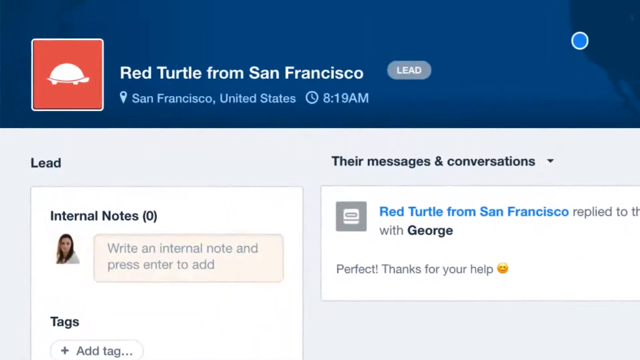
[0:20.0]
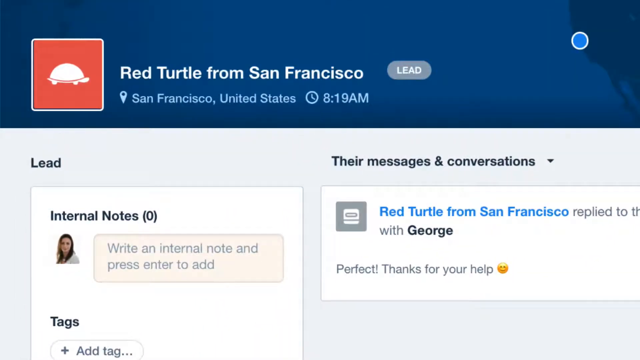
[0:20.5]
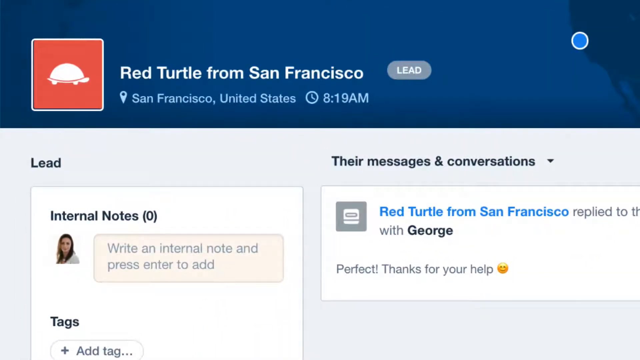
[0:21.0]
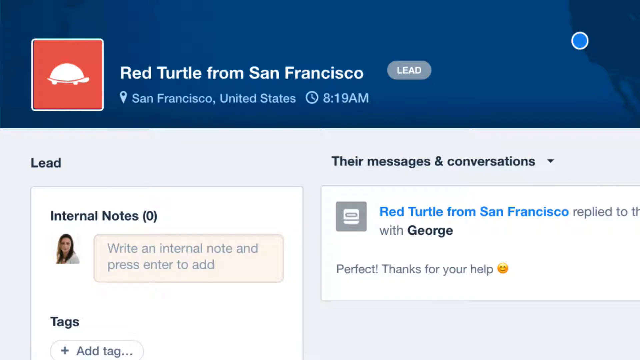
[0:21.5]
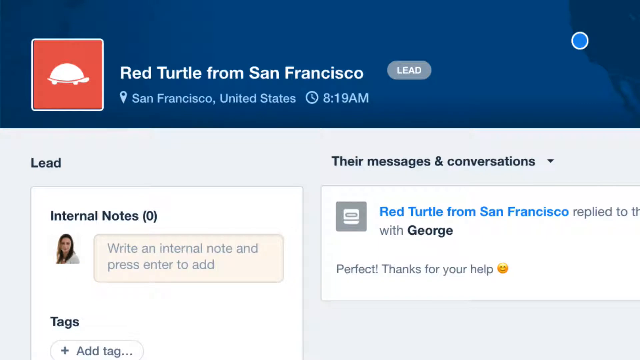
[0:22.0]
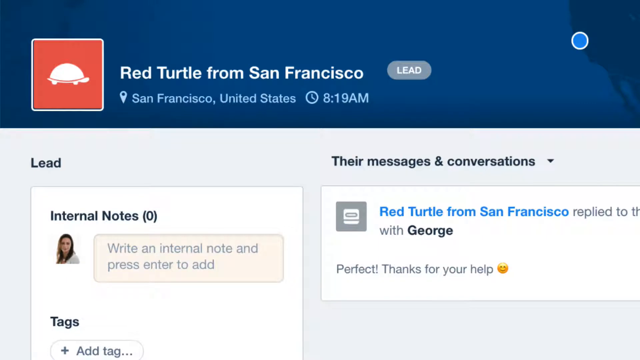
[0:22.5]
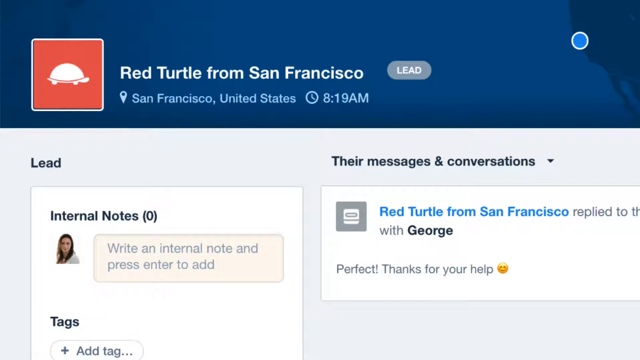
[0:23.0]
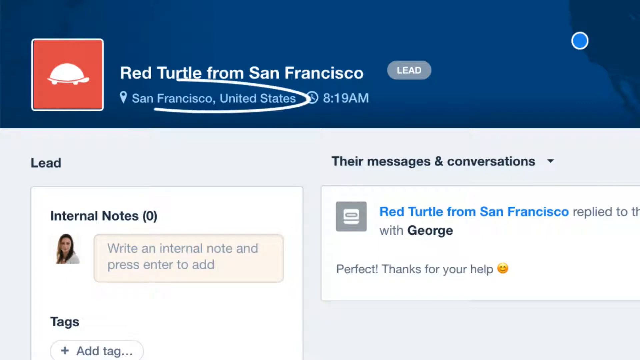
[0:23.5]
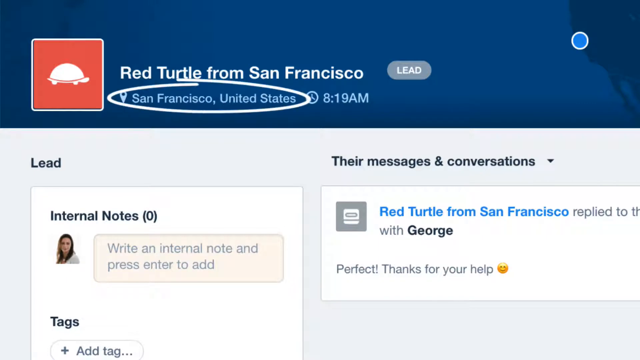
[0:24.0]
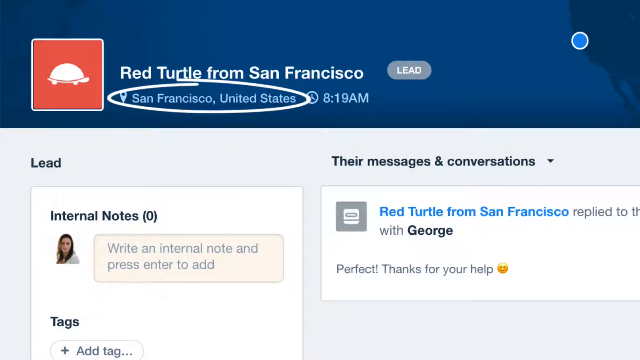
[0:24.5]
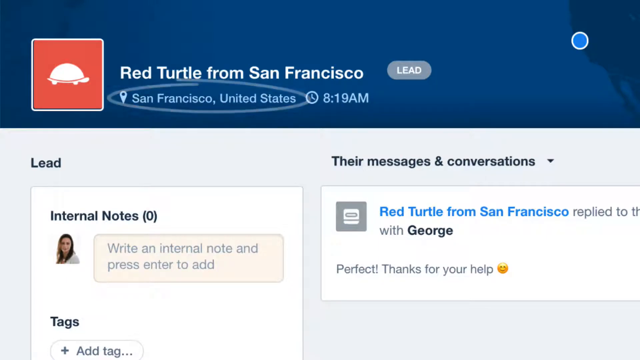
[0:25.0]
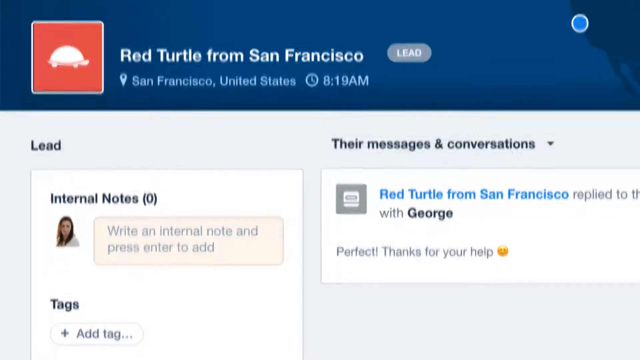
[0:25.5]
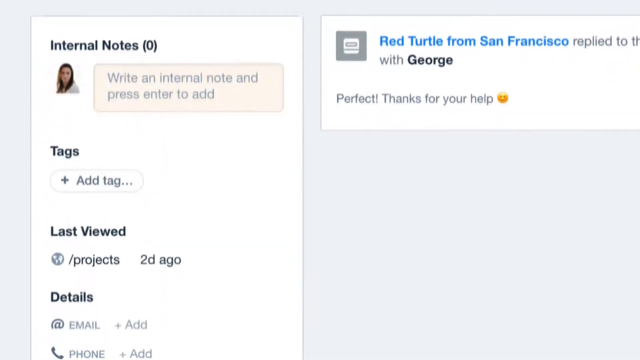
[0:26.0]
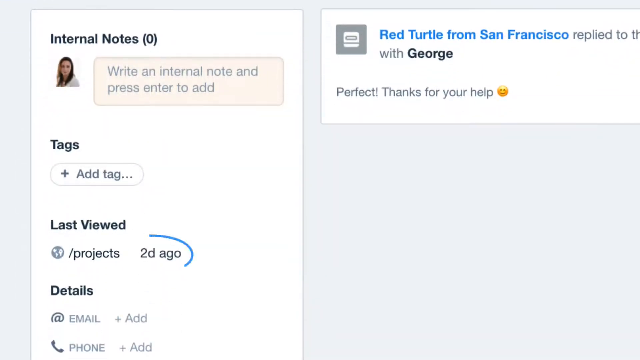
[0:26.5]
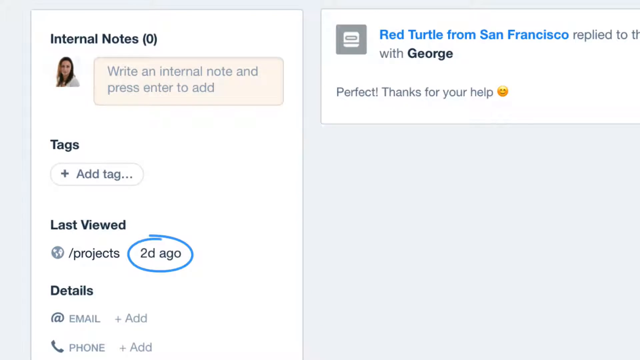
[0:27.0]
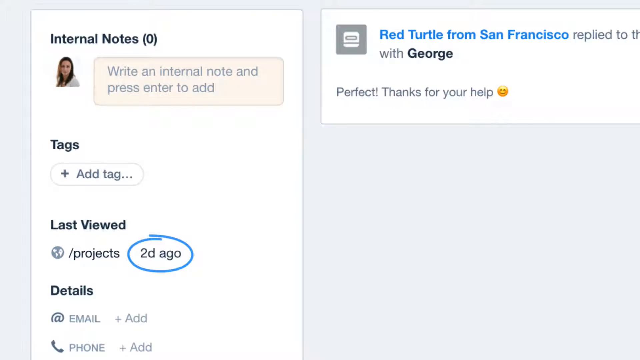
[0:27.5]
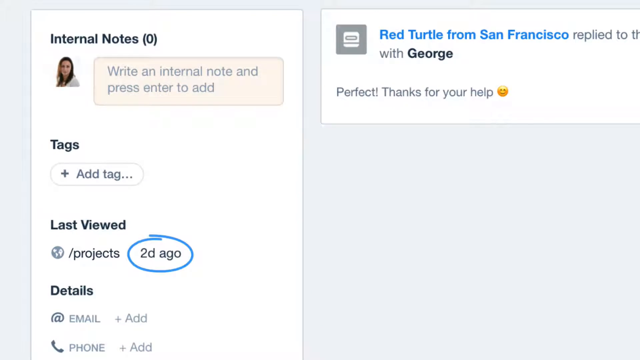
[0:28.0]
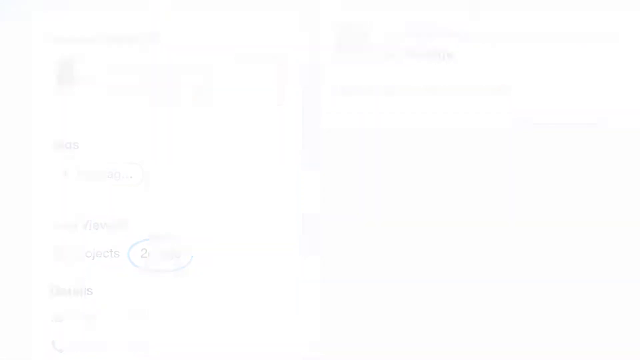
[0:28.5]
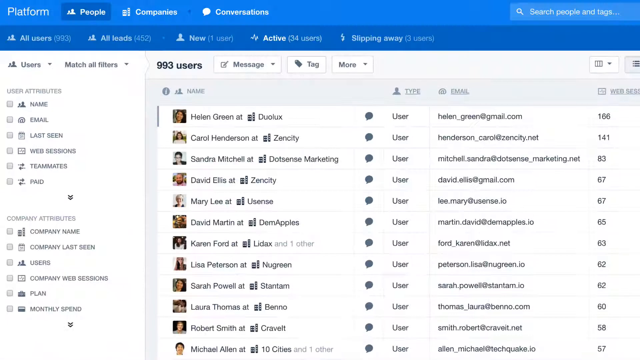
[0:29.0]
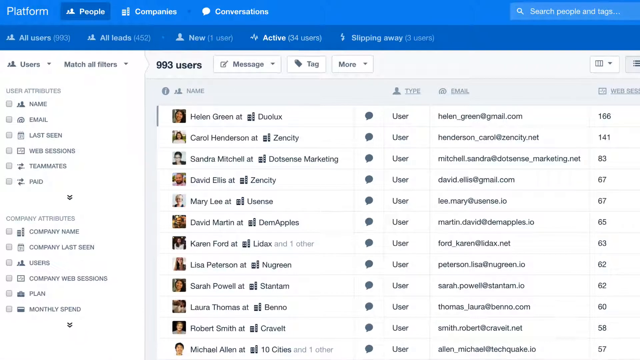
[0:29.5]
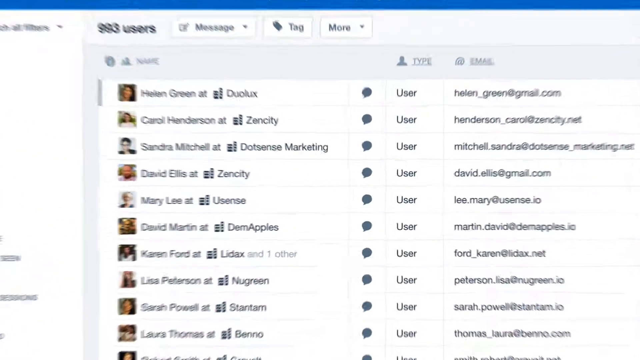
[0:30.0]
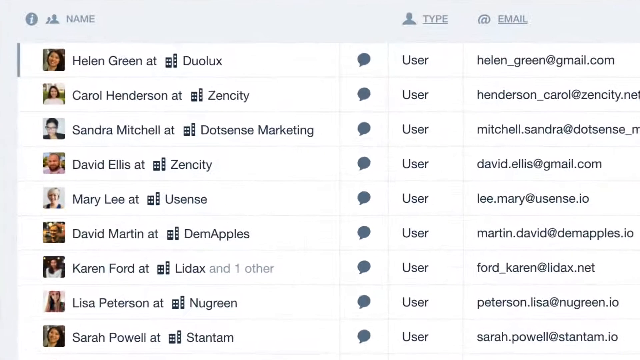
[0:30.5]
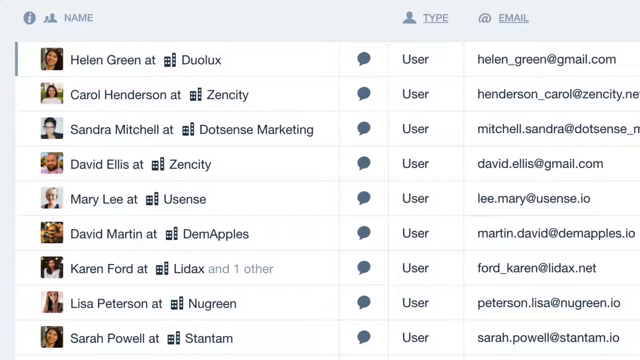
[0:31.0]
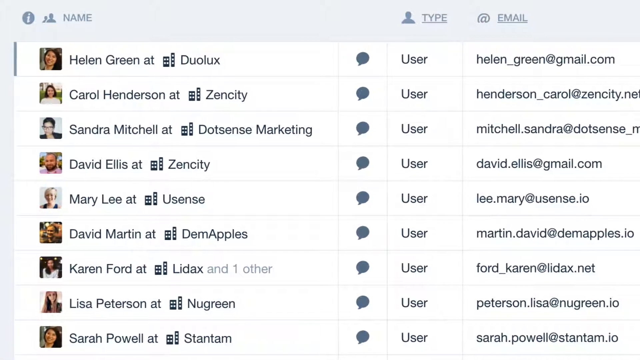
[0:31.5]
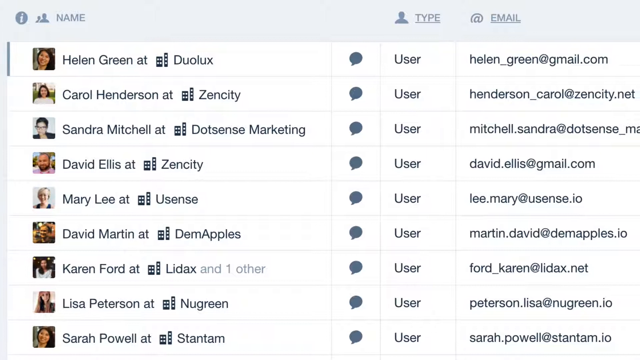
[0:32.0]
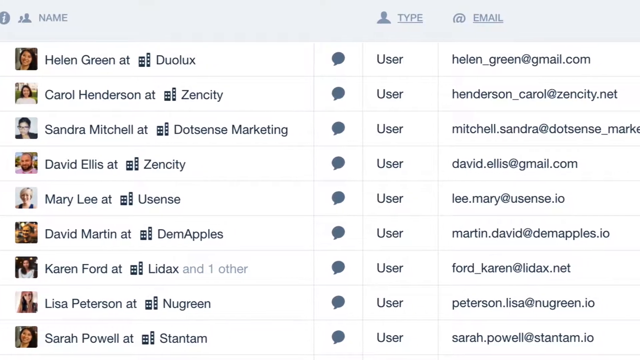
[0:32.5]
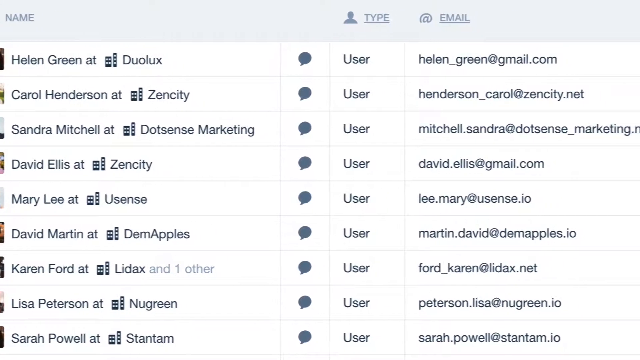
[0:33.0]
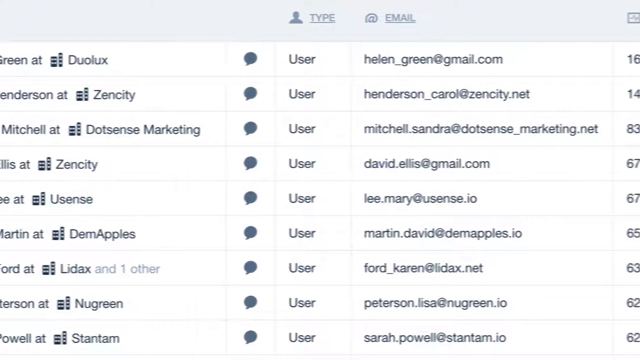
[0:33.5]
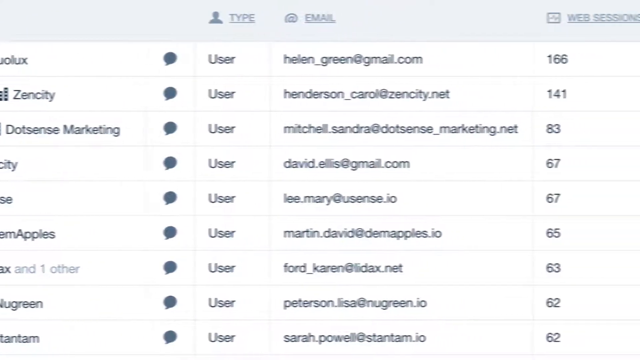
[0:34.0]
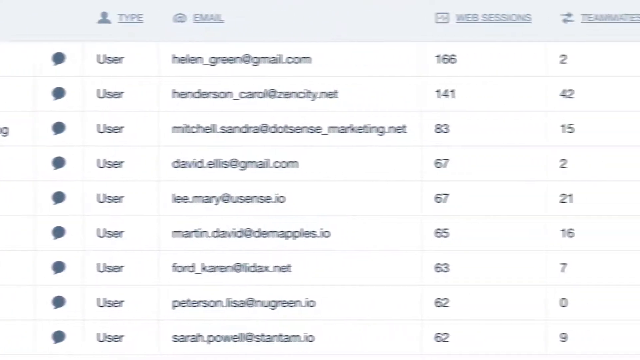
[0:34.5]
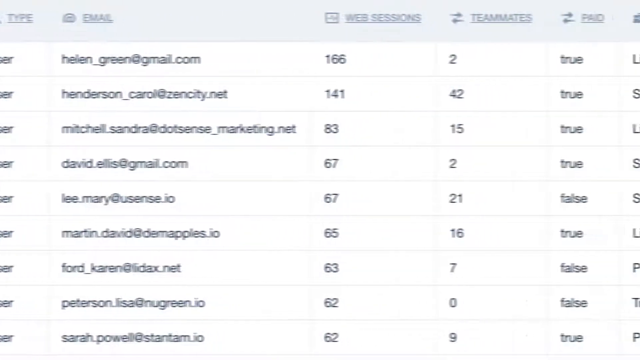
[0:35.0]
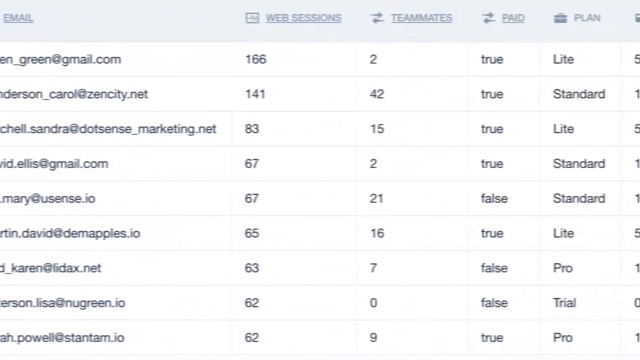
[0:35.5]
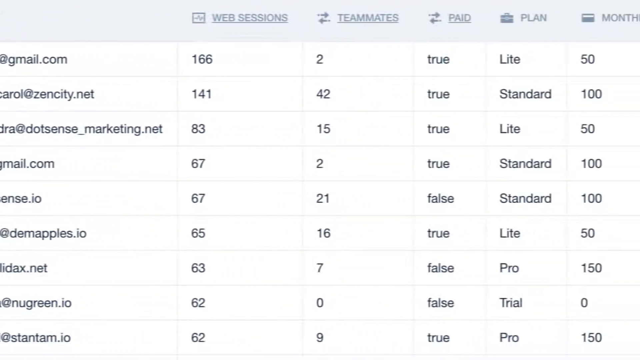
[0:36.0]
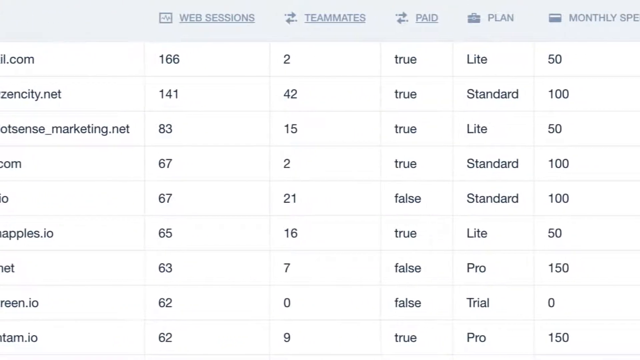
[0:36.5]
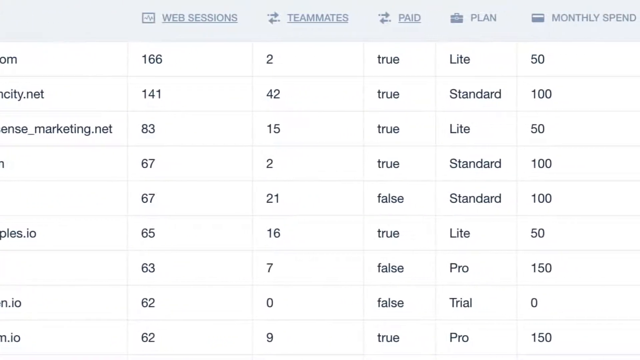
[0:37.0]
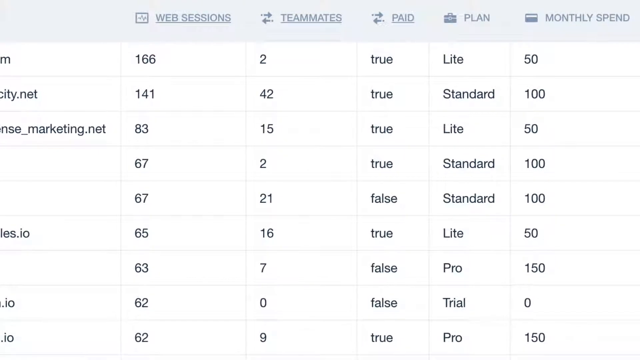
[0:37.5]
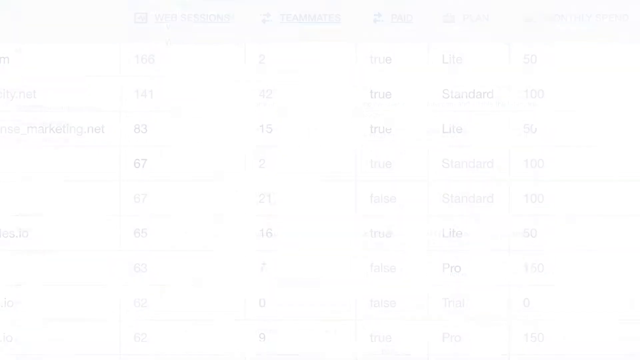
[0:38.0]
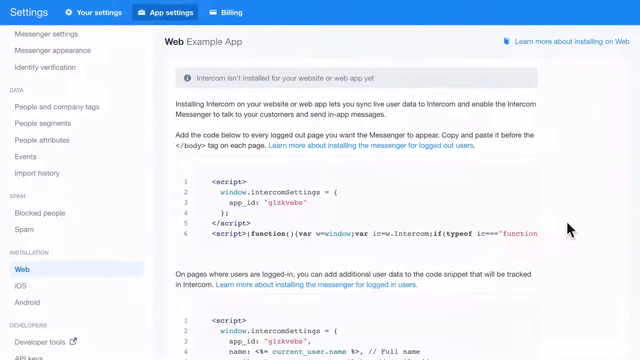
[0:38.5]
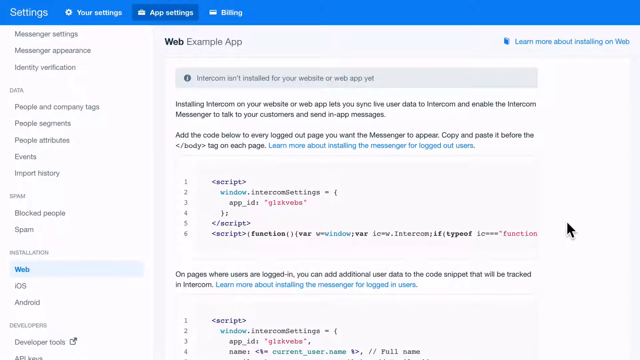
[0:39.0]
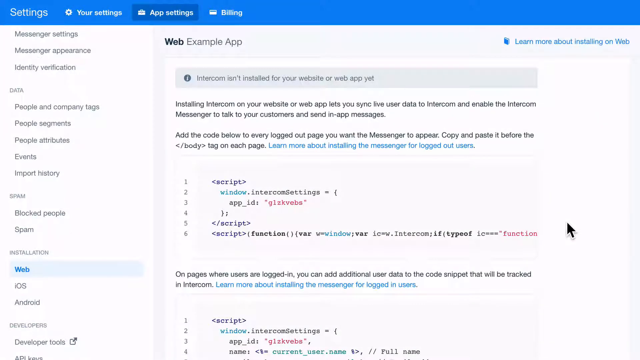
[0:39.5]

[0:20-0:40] A horizontal, rectangular page for the red turtle from San Francisco appears. A dark blue caption is about a fourth of the way down, with a blue dot in the top right-hand corner. At the top of the page is a red square with the silhouette of a turtle. On the right are "red turtle from San Francisco," a drop pin, and "San Francisco, United States" at 8:19 a.m. Beside the word Frisco is an oval shape with the word "lead," and "internal note 0." A woman faces to the right, looking out at the audience, next to the text "write an internal note and press enter to add." The right-hand column holds messages and conversations, including a reply from red turtle from San Francisco, with the name George, reading "Perfect. Thank you." A white circle encircles San Francisco, and further down it shows that it was last viewed two days ago. A scrolling paper moves from left to right.